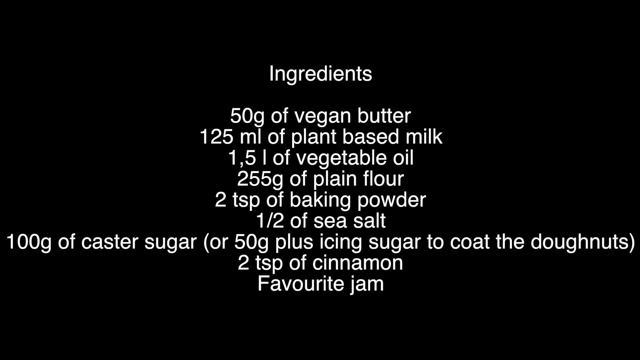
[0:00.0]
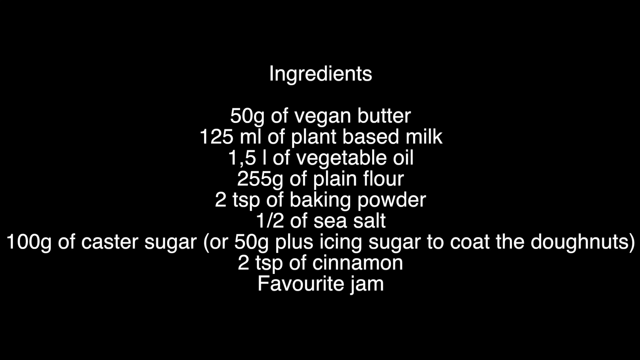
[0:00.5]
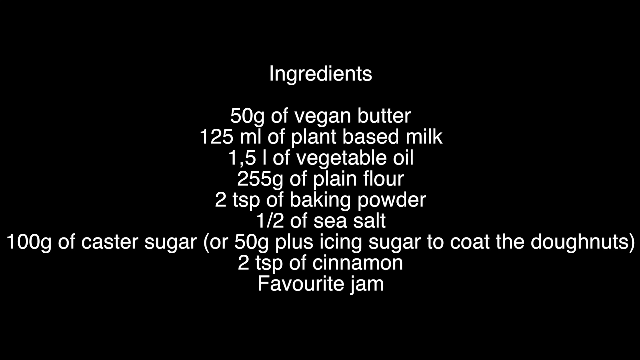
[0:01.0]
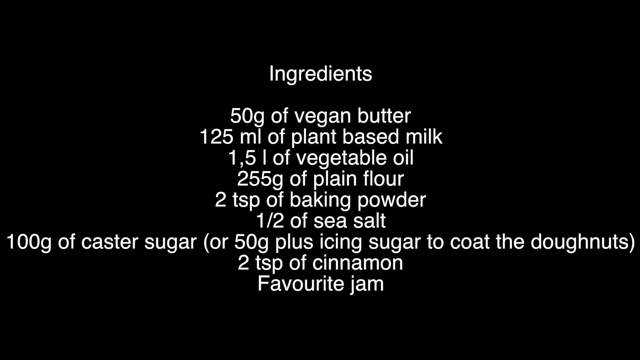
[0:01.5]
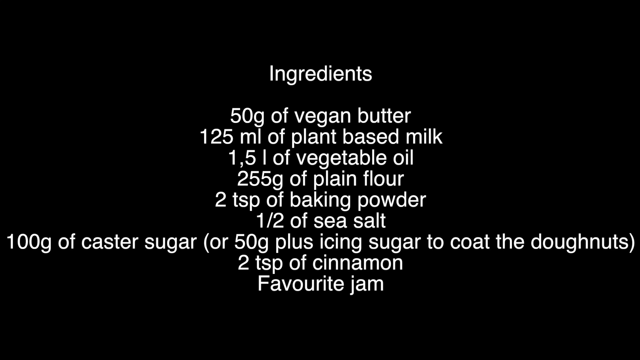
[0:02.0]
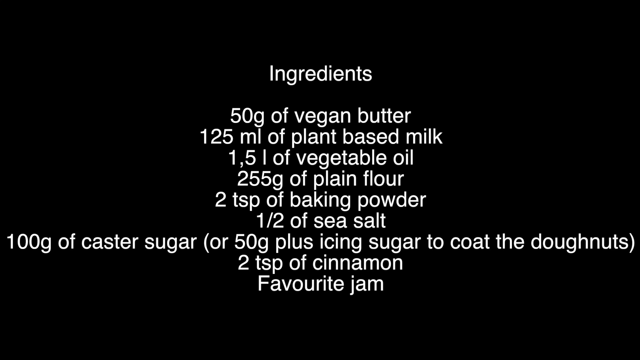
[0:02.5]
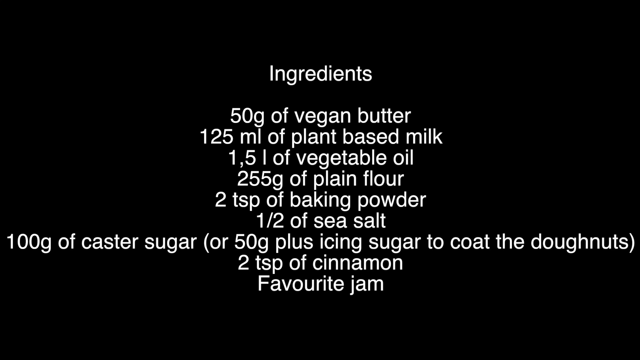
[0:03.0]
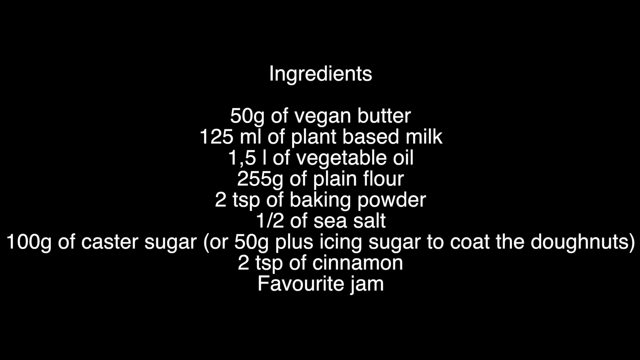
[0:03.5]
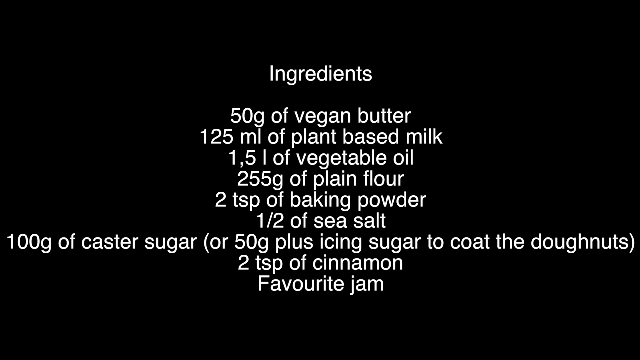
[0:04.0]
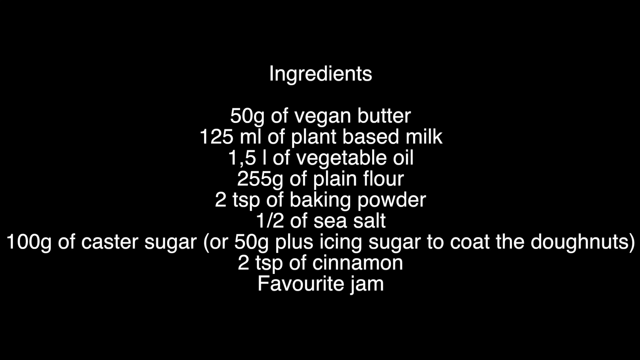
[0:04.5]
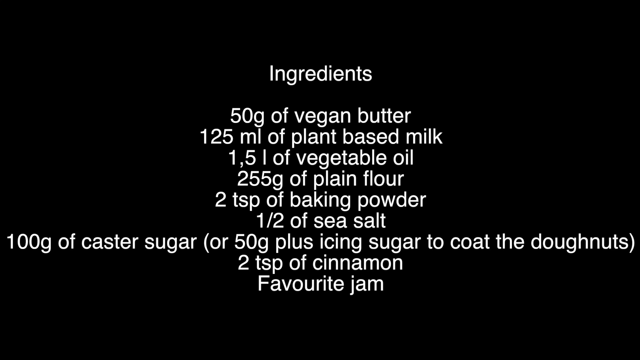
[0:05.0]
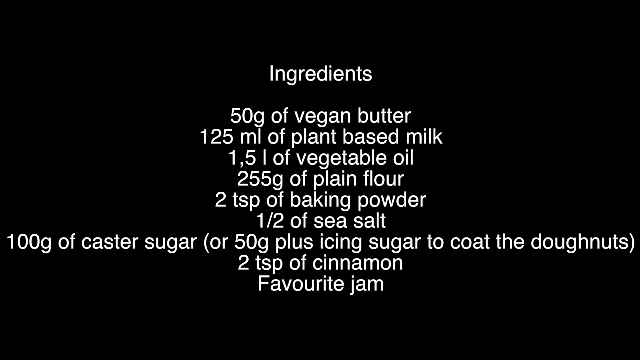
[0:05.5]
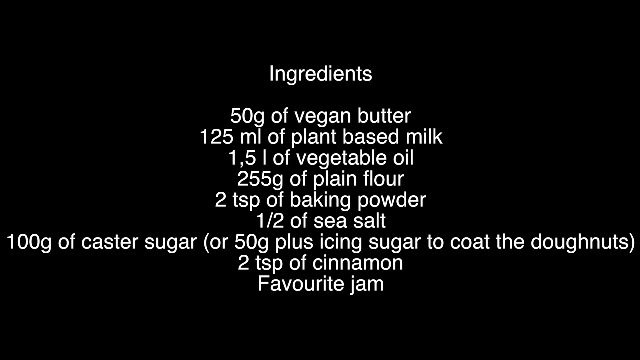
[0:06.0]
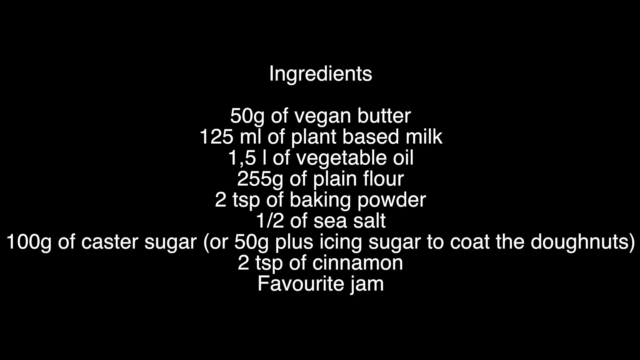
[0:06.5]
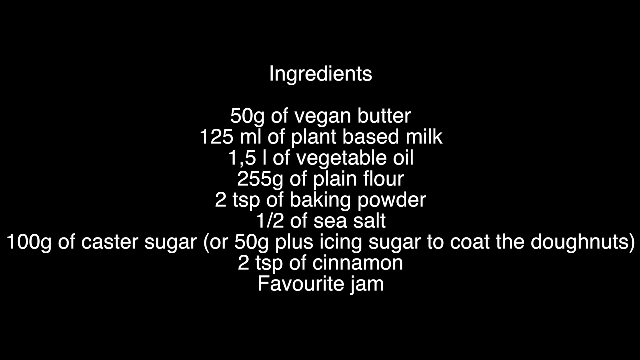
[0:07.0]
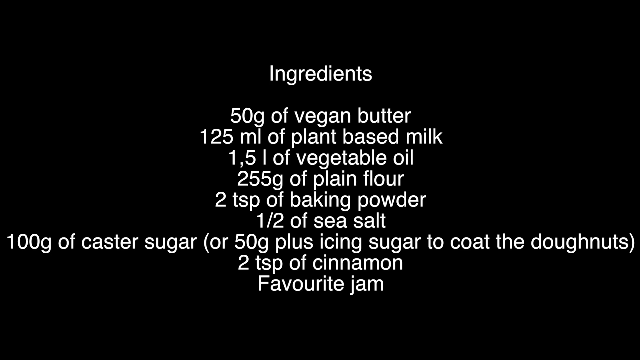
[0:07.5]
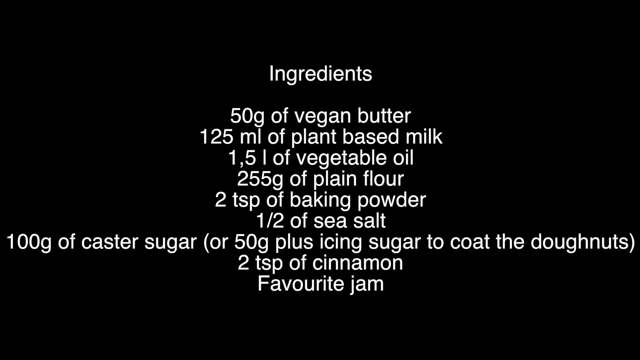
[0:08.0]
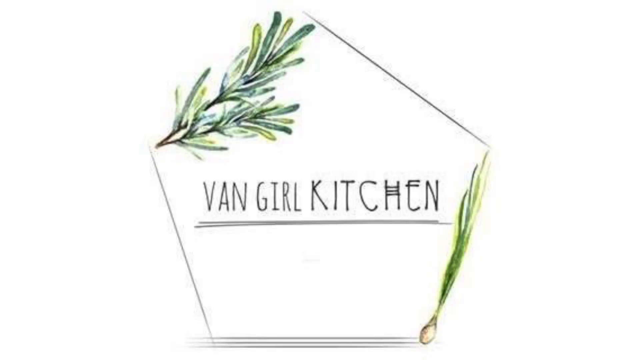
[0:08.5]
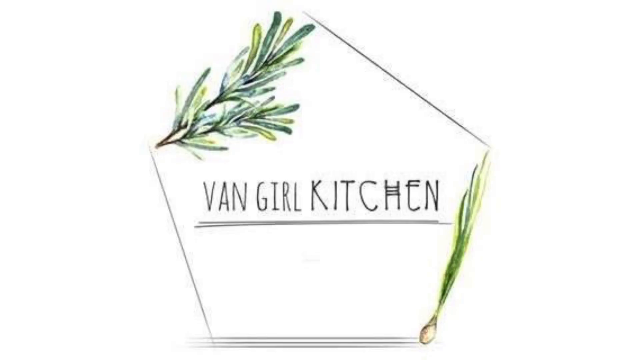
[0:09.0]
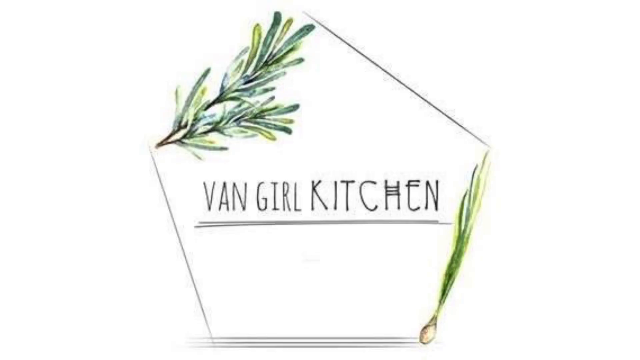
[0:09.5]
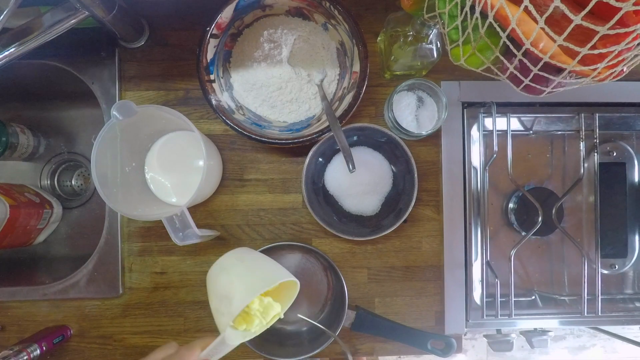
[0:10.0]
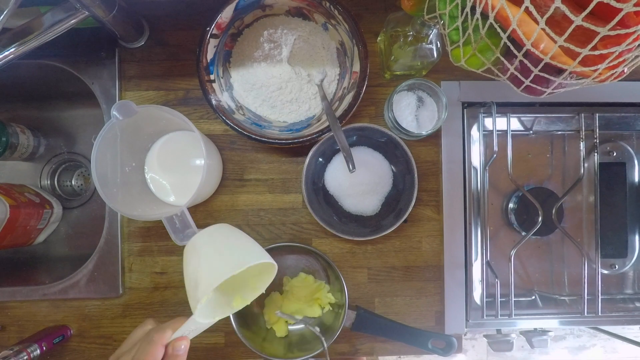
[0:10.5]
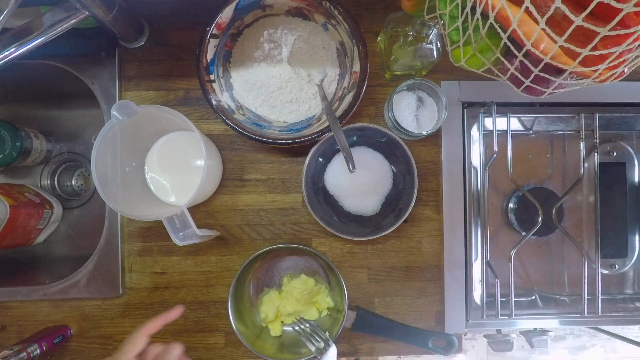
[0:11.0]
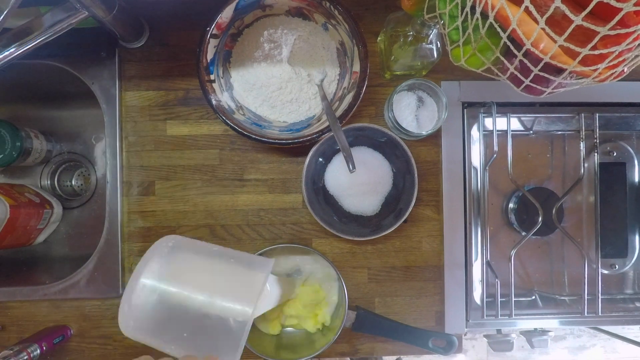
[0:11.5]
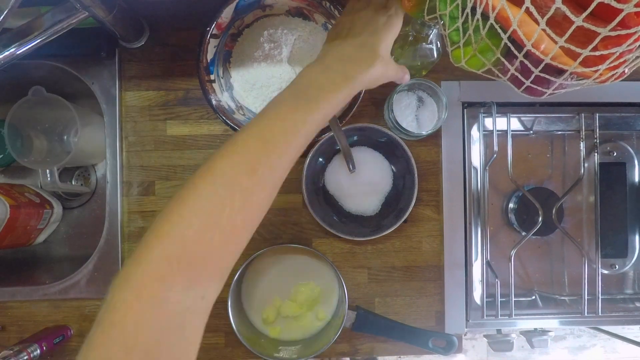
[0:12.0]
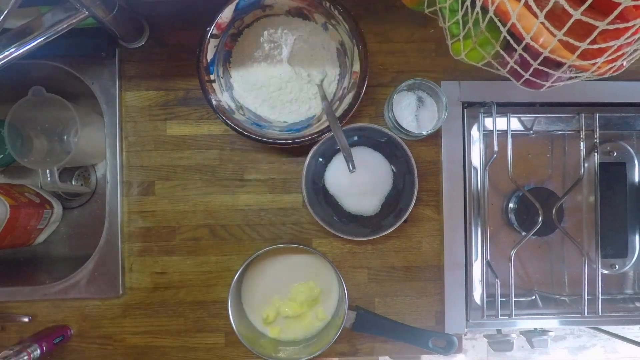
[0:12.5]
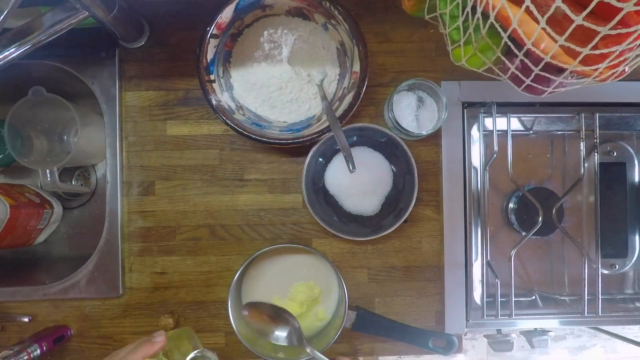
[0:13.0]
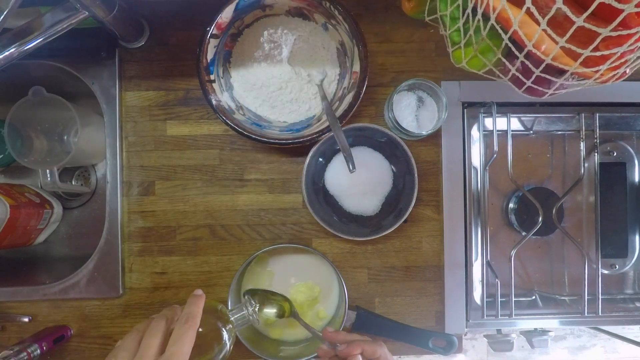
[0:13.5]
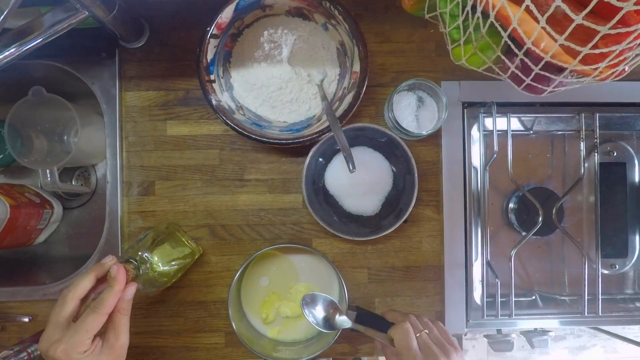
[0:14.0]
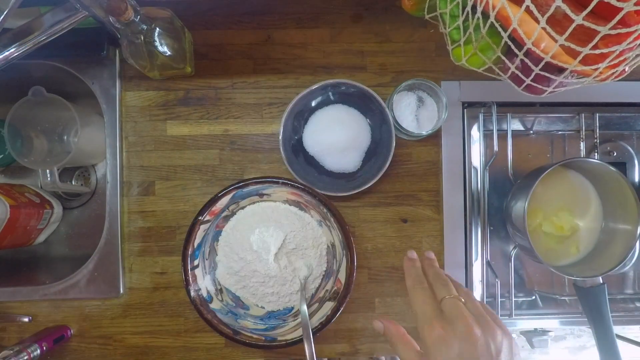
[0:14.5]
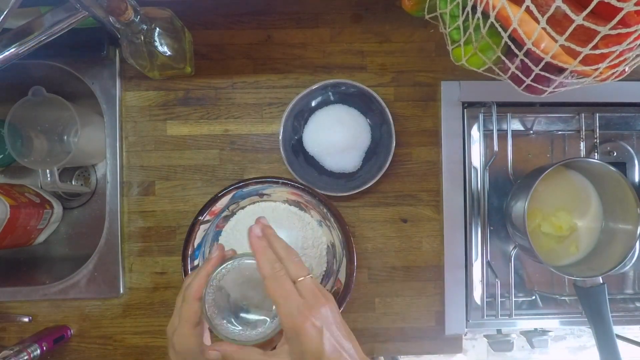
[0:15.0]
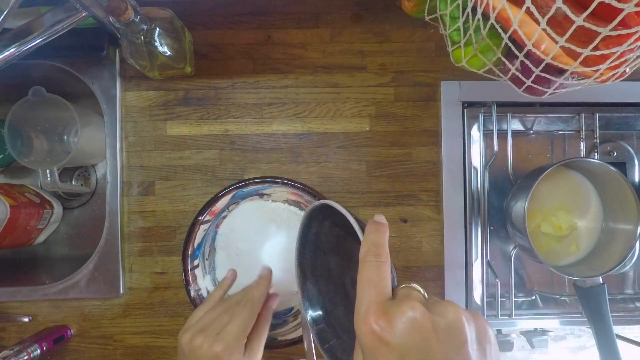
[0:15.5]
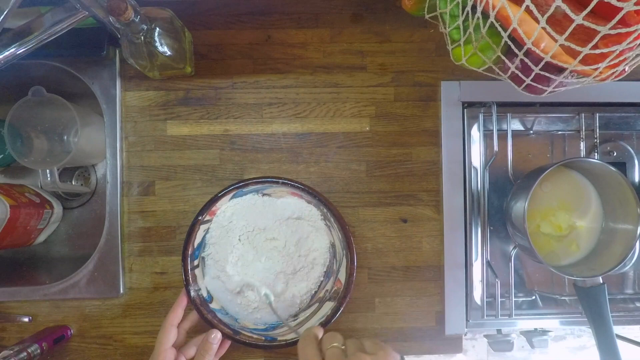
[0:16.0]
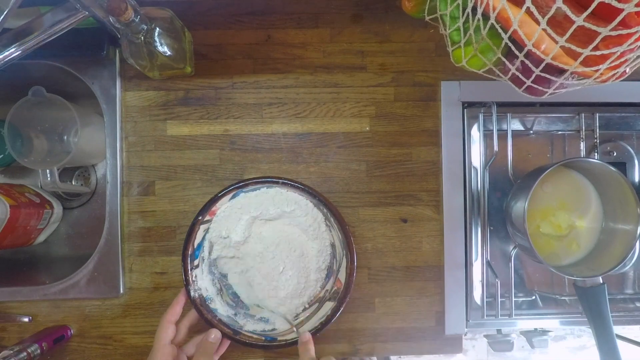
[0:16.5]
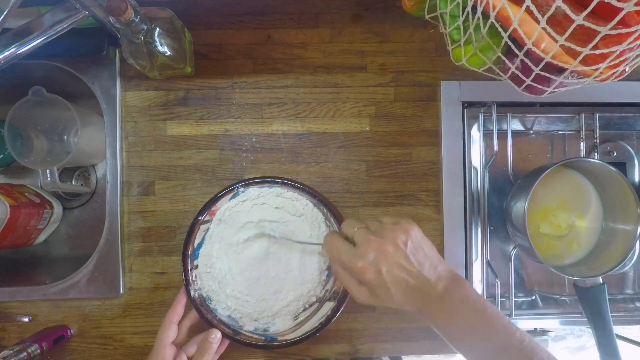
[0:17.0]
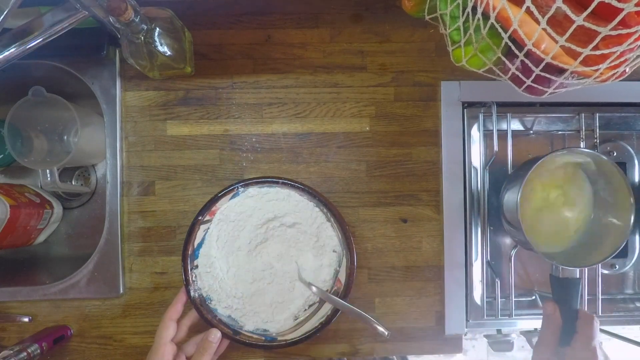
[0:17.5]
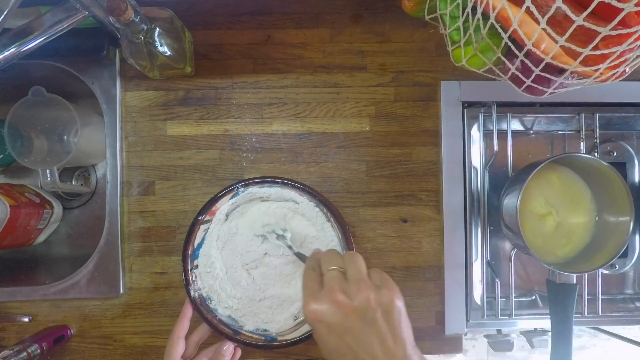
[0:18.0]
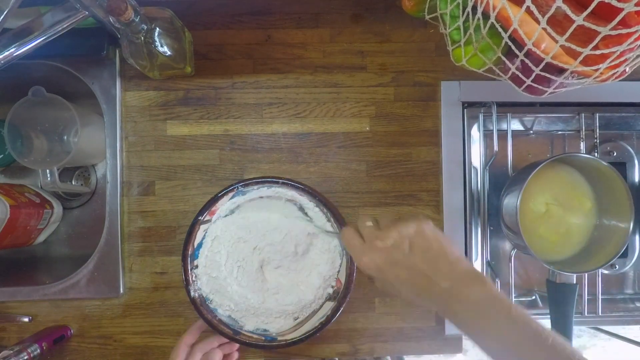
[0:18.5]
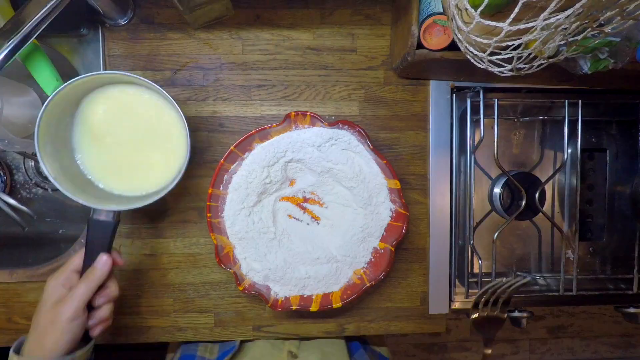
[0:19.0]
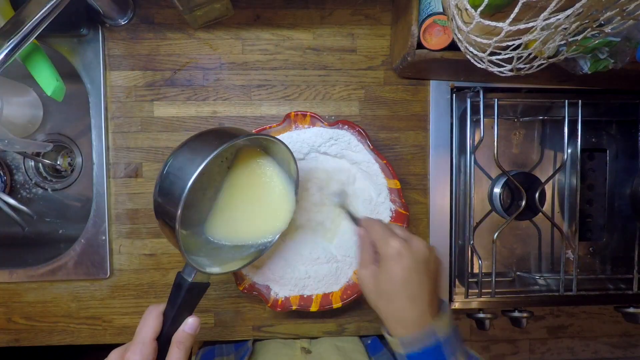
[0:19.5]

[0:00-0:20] An ingredient list appears on screen: vegan butter, 125 milliliters of plant-based milk, vegetable oil (shown as "1,5 L", probably meaning 1.5 liters), 255 grams of plain flour, two teaspoons of baking soda, half a teaspoon of sea salt, caster sugar, 50 grams plus of icing sugar to coat the donuts, two cups of cinnamon, and favorite jam. The list stays on the screen for quite some time. Then "Van Girl Kitchen" appears, and a woman is shown cooking. She adds seasoning and everything else into a small silver pot, mixes something in a bowl, brings what she is cooking to a boil, and then mixes everything together in the bowl. This part of the video is sped up.